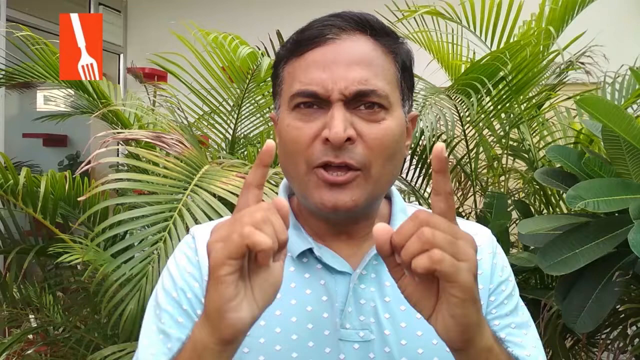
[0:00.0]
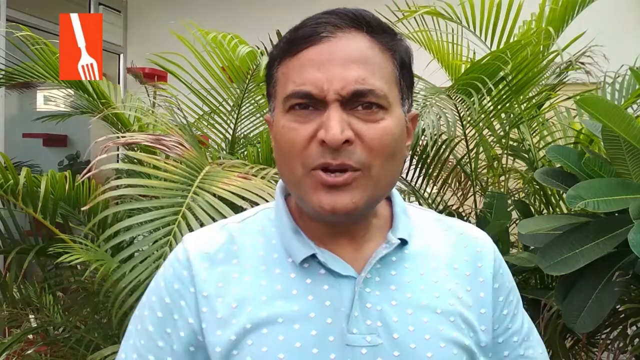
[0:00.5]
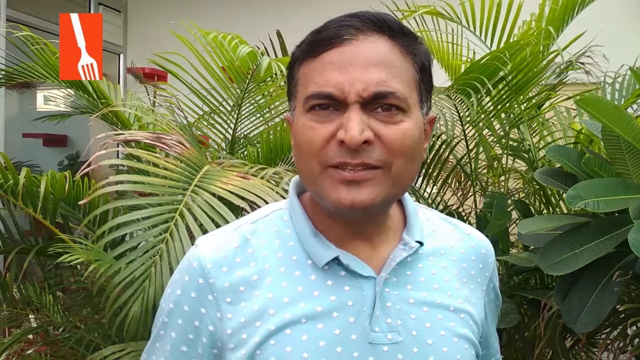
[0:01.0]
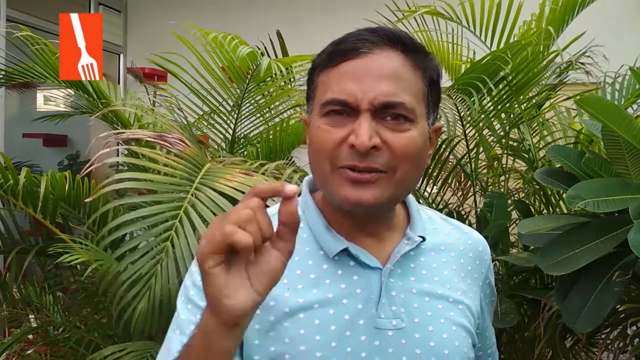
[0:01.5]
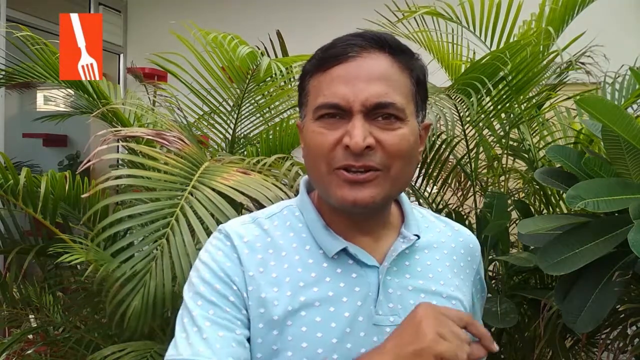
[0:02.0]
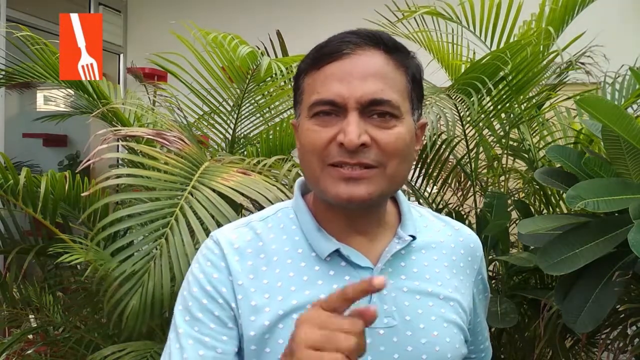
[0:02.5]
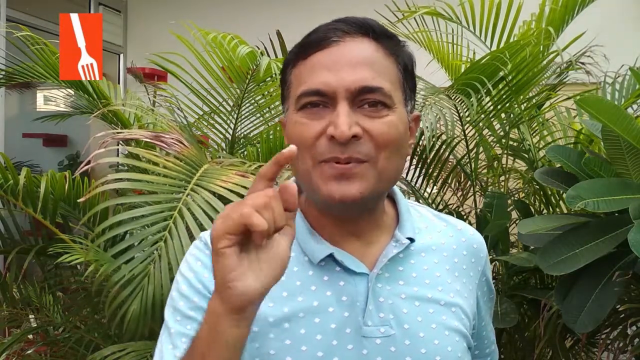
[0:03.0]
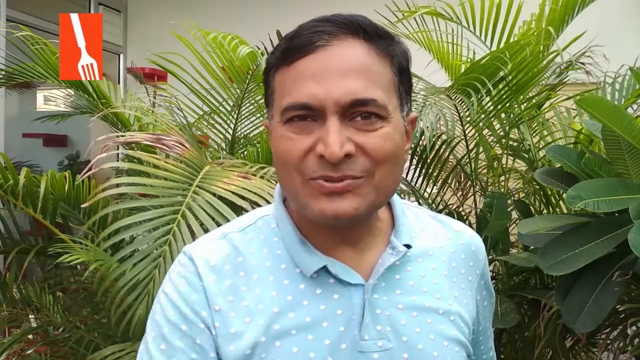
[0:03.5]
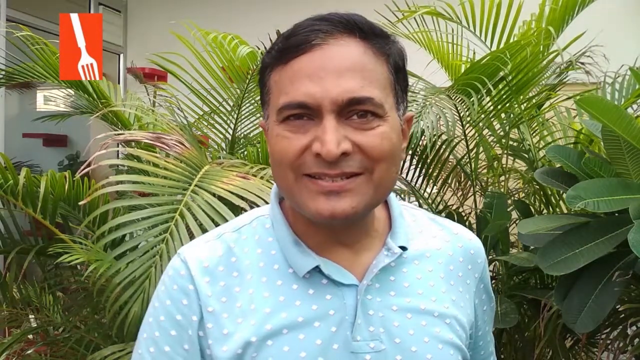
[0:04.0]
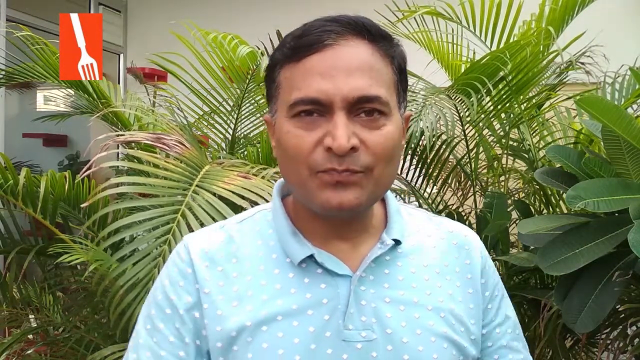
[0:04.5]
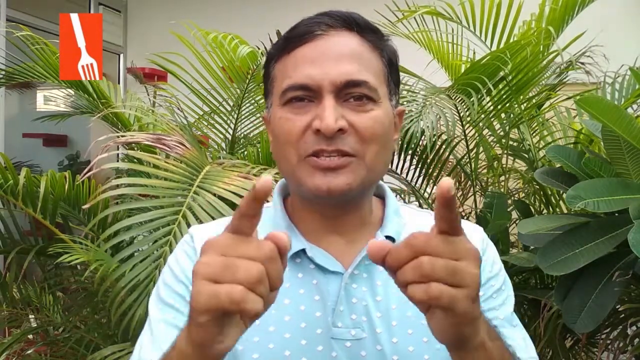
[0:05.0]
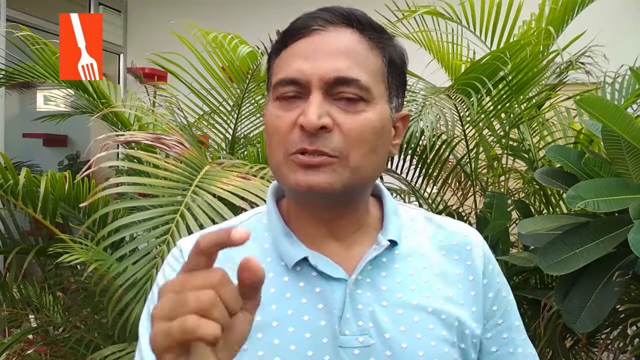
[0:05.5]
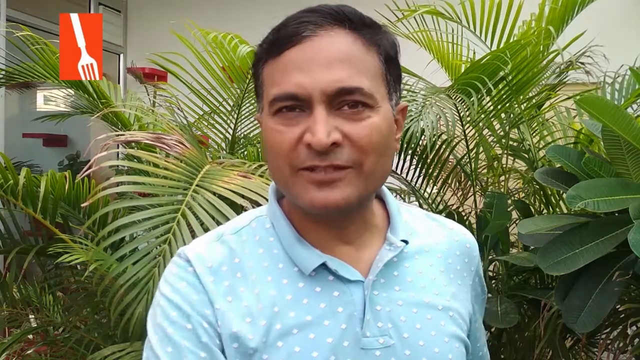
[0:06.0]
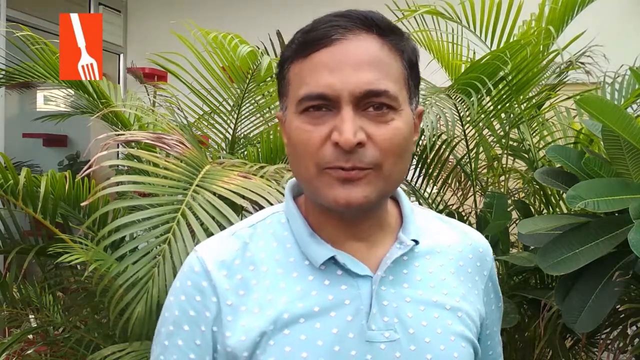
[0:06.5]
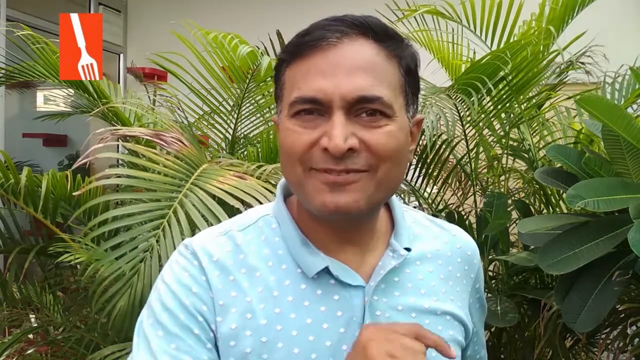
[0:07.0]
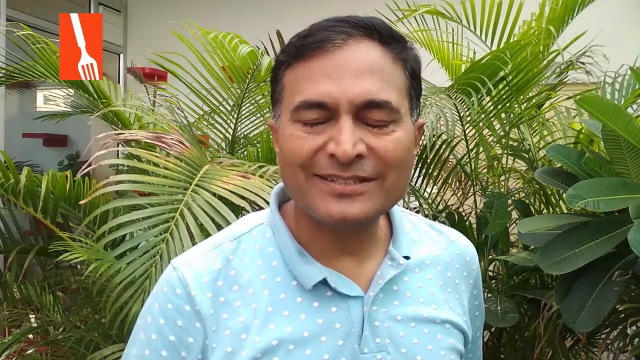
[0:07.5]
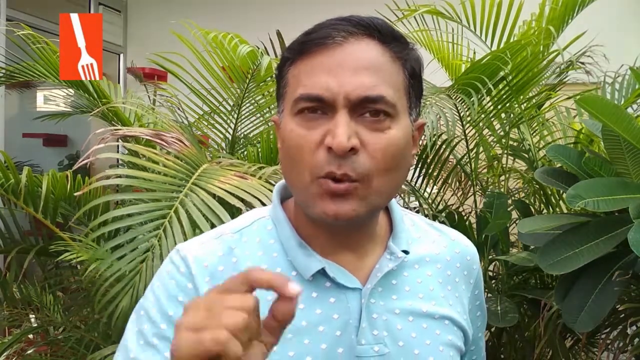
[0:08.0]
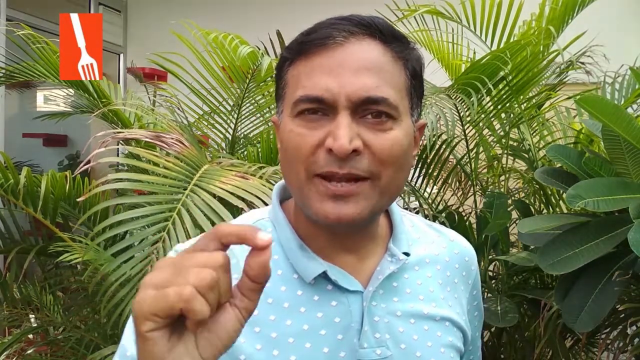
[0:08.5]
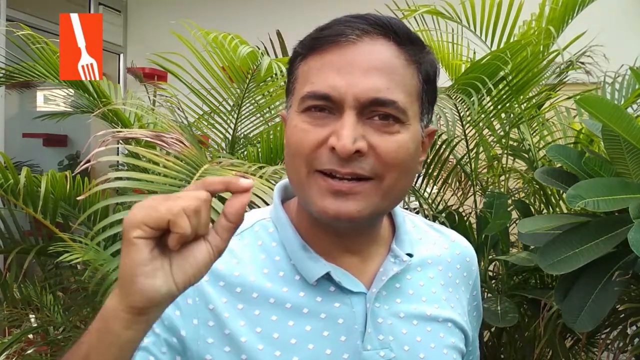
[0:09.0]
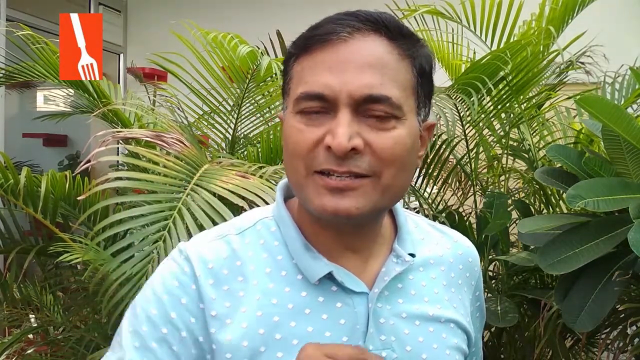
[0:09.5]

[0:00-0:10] A man looks at the camera with both hands pointed directly up, the index finger of each hand extended and the other fingers clenched in, more like a fist. He lowers both hands, then uses his right hand to gesture upwards in front of him as he speaks to the camera. He then uses both hands again, index fingers extended, pointing in front of him toward the camera.